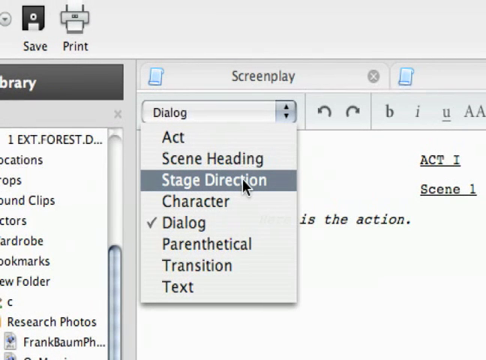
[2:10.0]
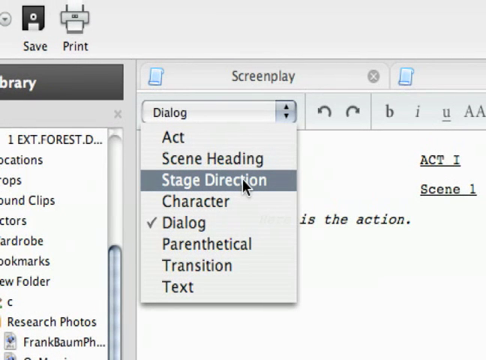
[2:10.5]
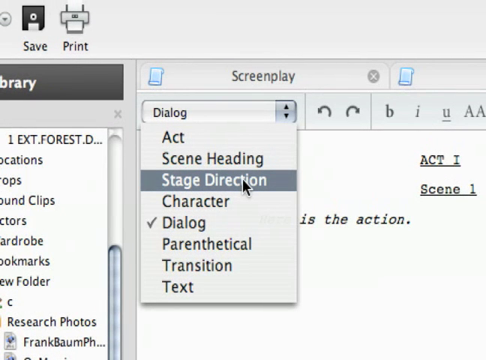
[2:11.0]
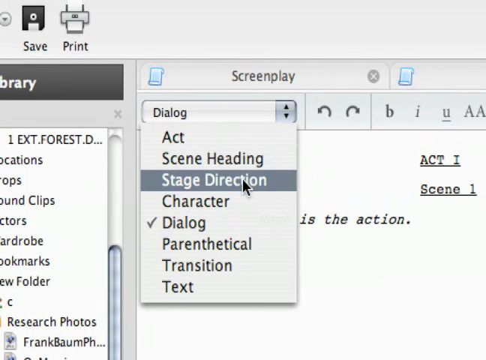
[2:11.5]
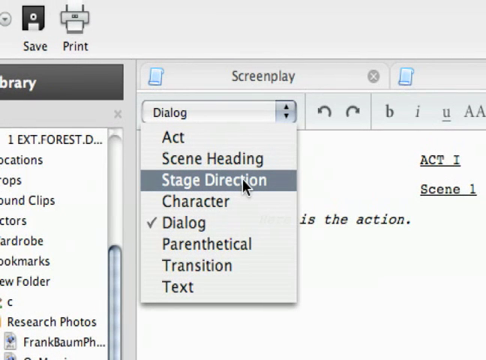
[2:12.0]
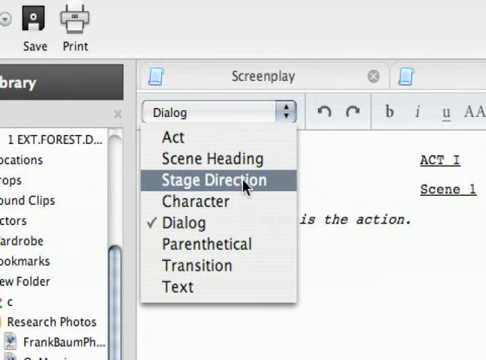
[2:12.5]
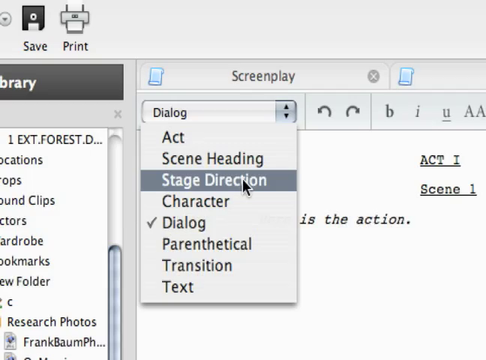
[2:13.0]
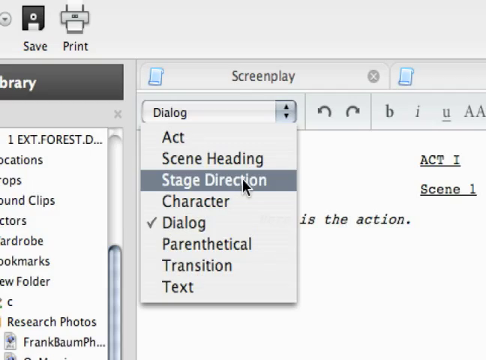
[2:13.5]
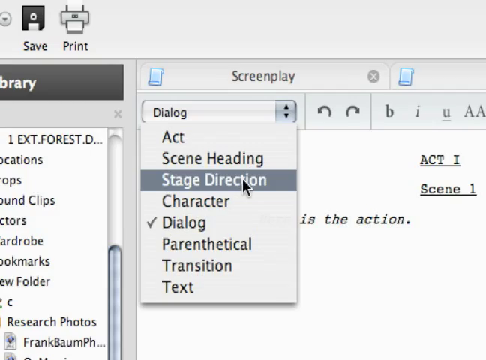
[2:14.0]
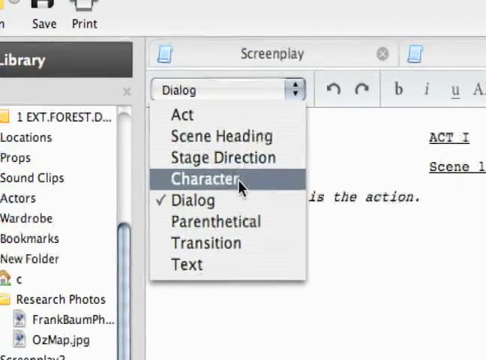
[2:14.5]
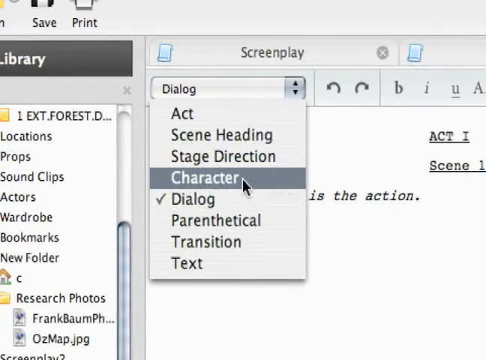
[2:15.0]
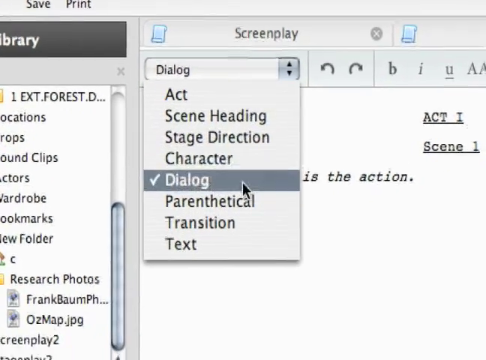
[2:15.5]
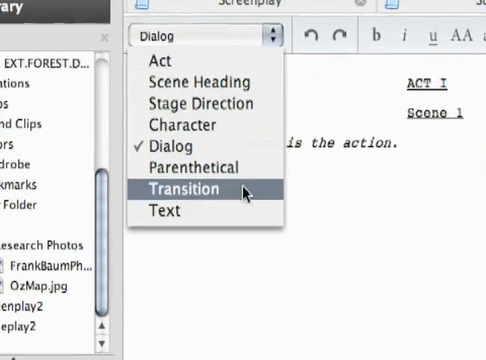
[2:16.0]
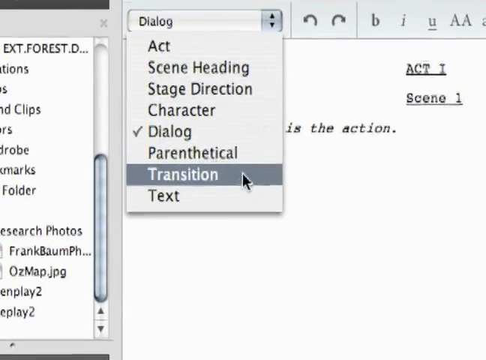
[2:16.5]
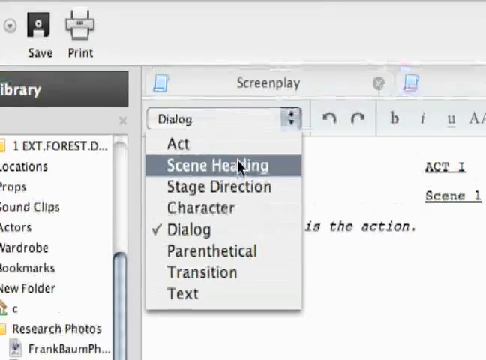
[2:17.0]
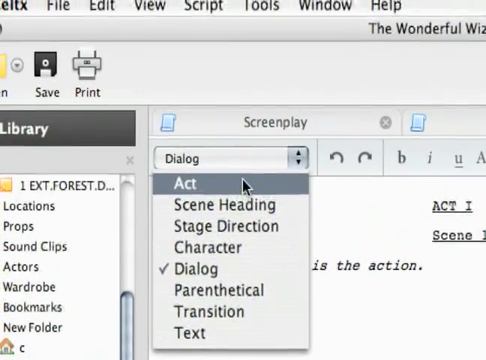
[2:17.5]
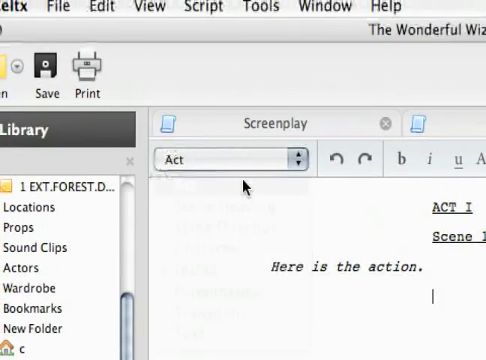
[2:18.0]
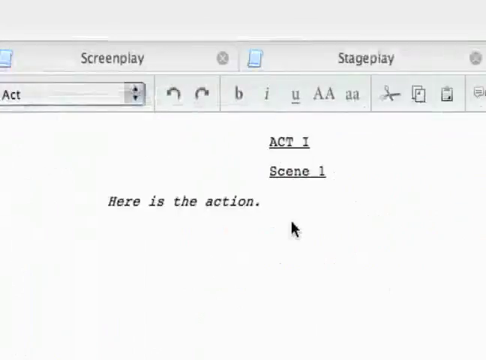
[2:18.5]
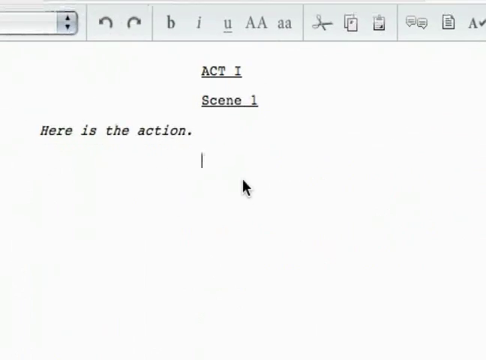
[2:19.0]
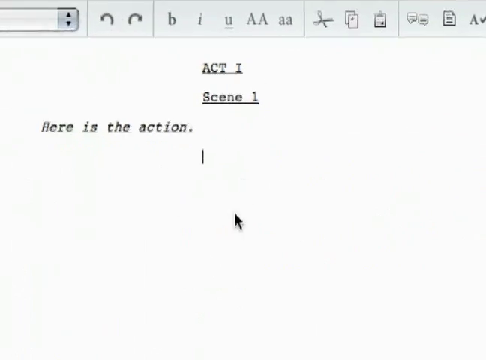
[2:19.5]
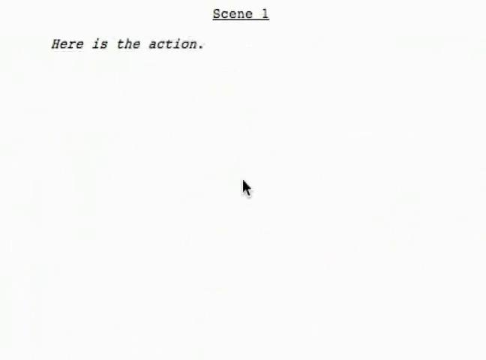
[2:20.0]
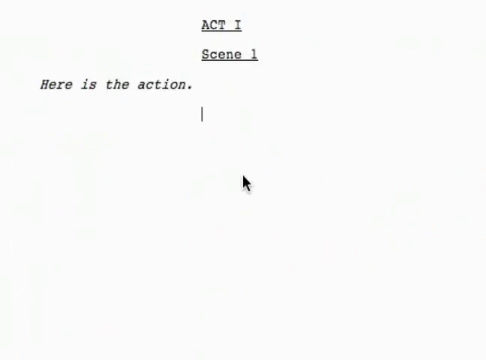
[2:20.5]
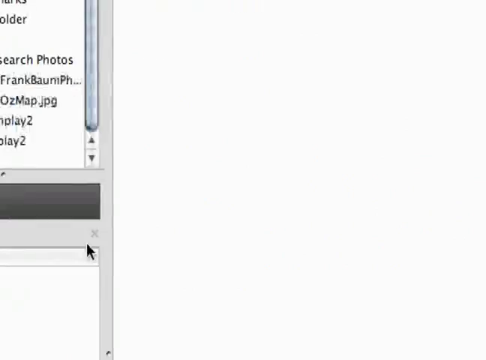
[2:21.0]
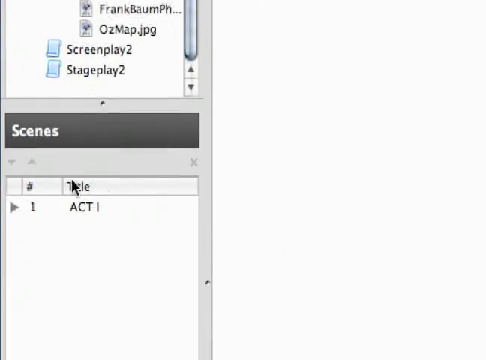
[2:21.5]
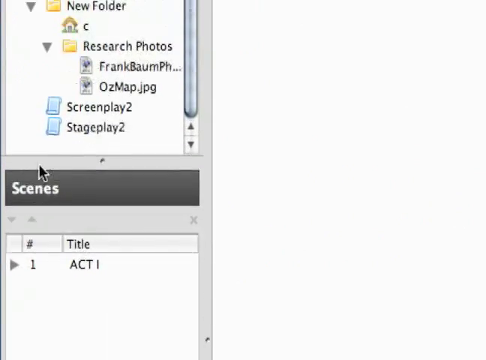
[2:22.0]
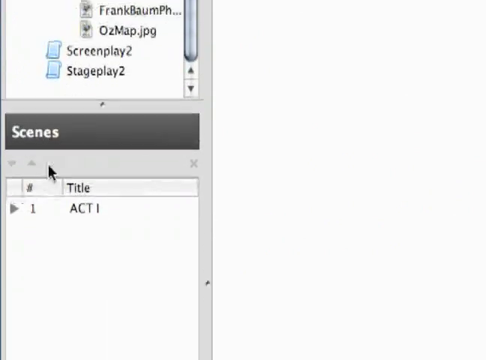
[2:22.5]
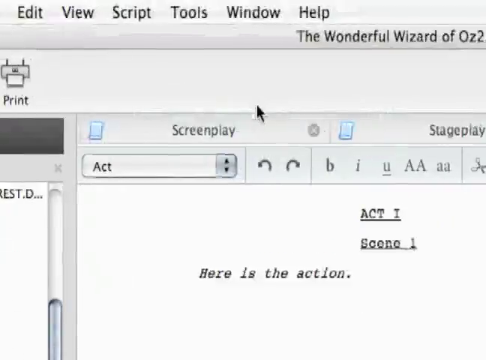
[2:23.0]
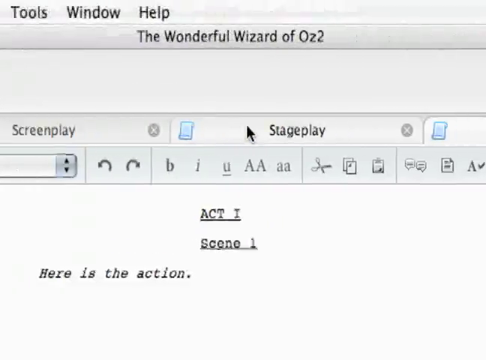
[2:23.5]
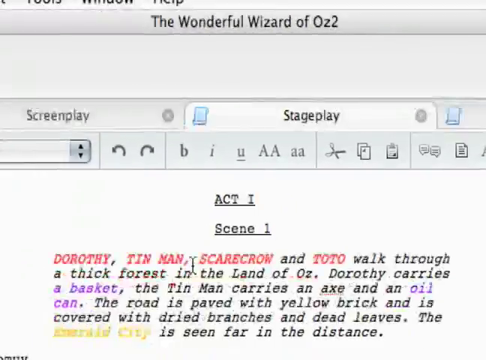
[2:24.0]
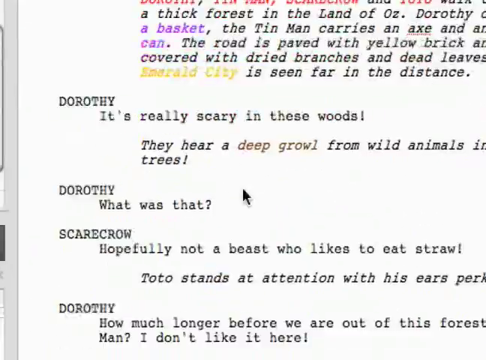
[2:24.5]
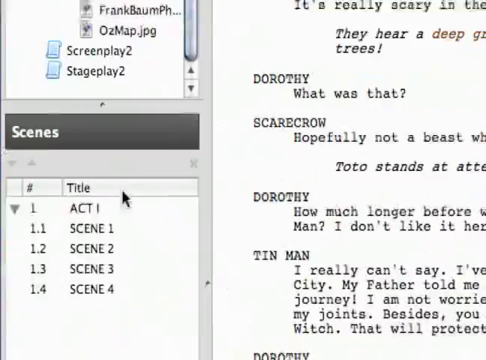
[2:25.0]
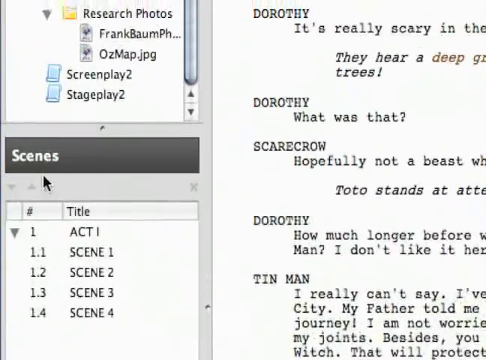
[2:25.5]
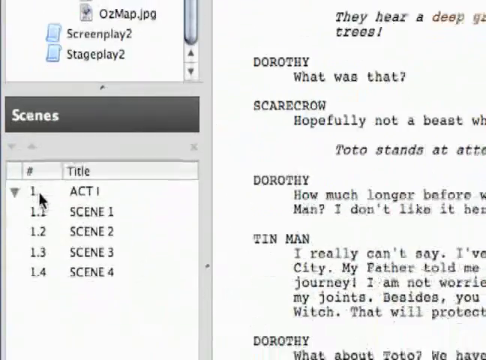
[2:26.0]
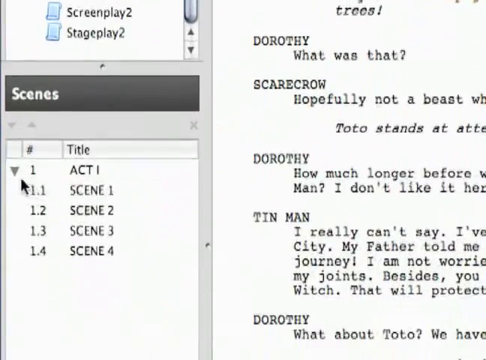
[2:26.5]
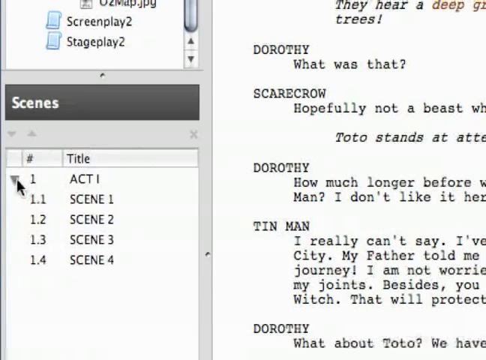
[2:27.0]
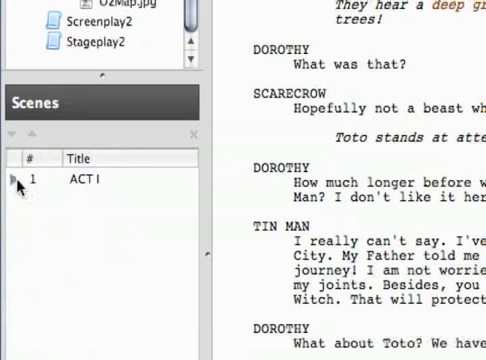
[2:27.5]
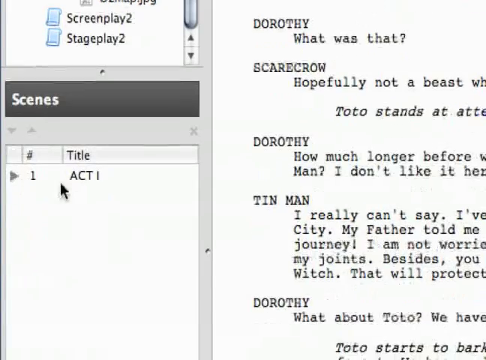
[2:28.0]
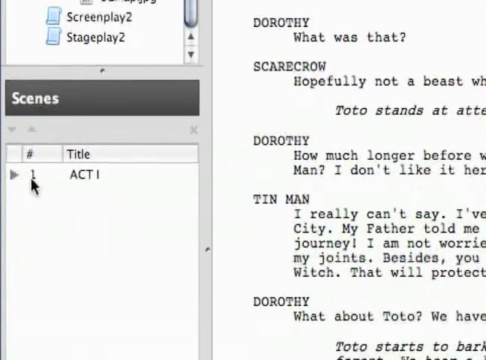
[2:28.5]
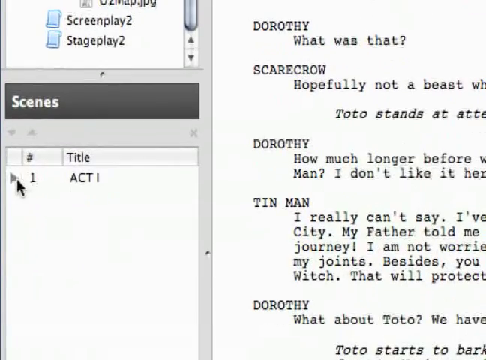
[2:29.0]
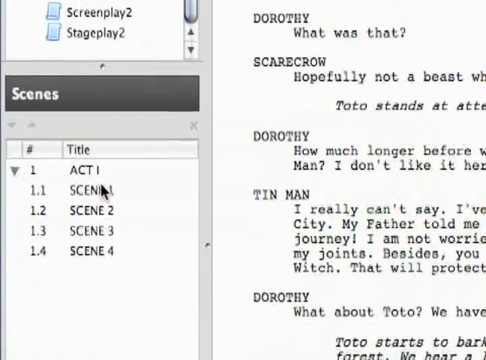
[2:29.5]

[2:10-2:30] The cursor hovers over the Stage Direction option, then Character, moves down and up through the options, and finally clicks Act, which positions the text entry bar below and at the end of the sentence "here is the action". The camera and cursor move to the center of the blank document and then to the bottom left, to a subheading in a black rectangle on the left sidebar reading "Scenes" in white. Below it is a table with number and title columns, showing 1 under number and "Act 1" under title. The cursor goes back up and to the right to the Stage Play tab and clicks it, and the original Wizard of Oz script with its variously colored text appears. The cursor returns to the Scenes section on the left bar, which now lists the numbers 1, 1.1, 1.2, 1.3 and 1.4 with the titles Act 1, Scene 1, Scene 2, Scene 3 and Scene 4. To the left of the 1 is a downward-pointing collapse triangle; the cursor clicks it, it points right, and the entries collapse into Act 1. Clicking it again expands all the titles.